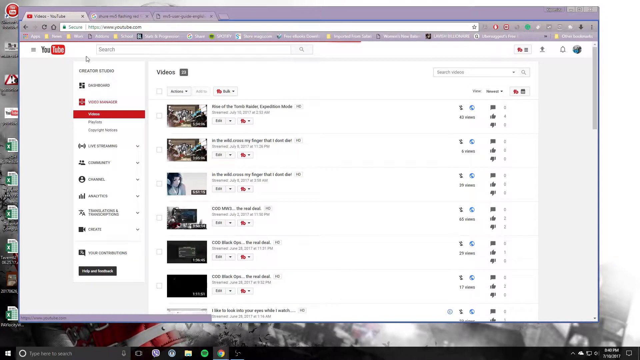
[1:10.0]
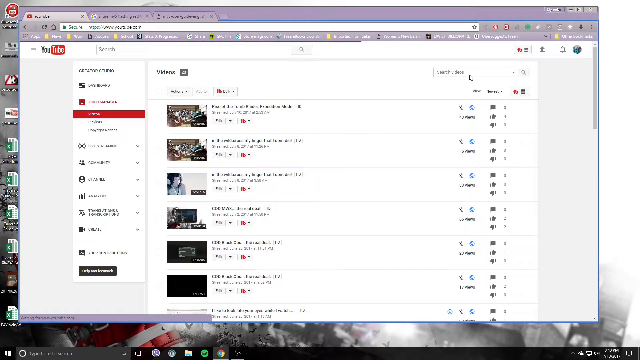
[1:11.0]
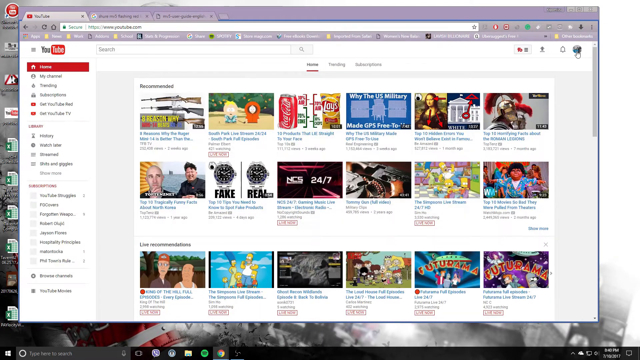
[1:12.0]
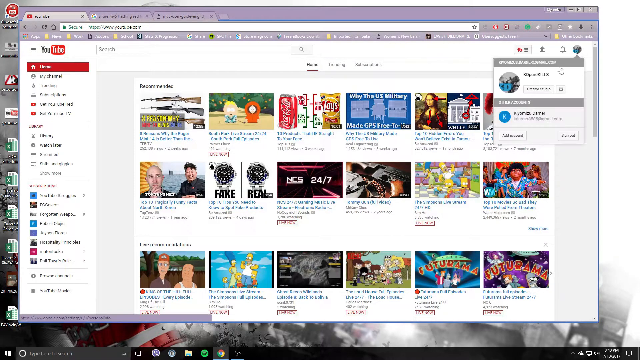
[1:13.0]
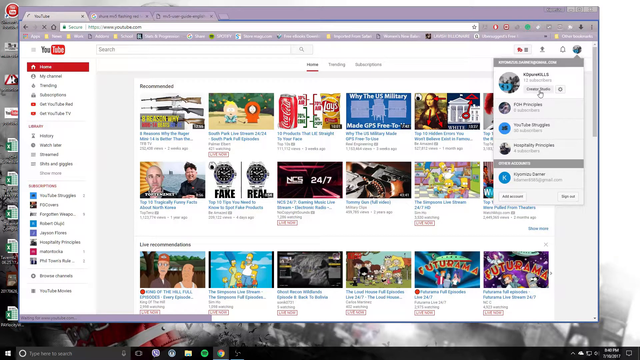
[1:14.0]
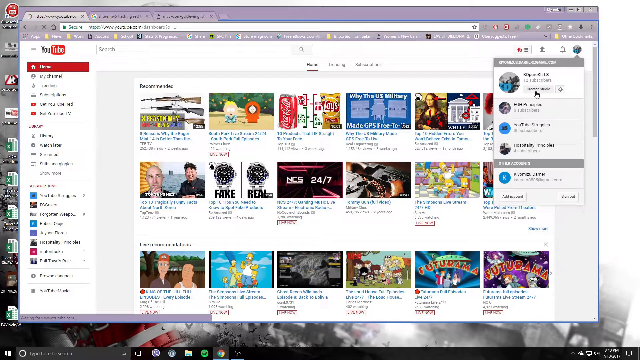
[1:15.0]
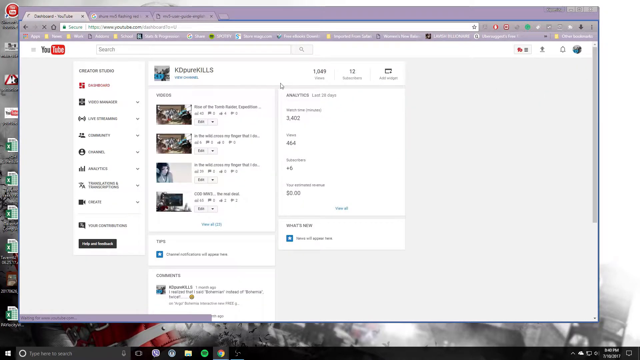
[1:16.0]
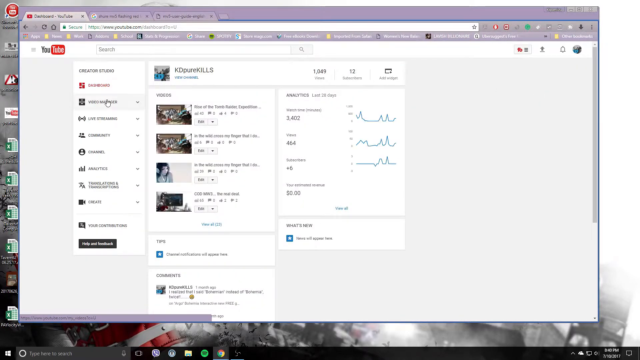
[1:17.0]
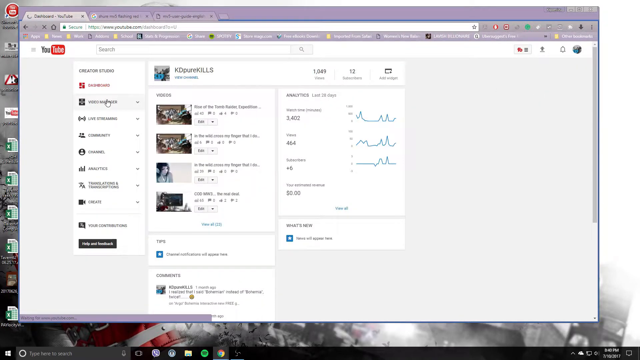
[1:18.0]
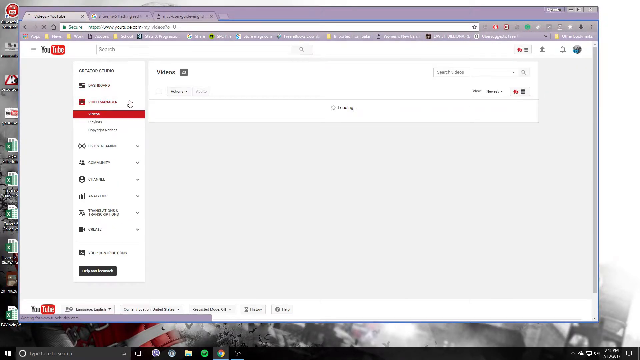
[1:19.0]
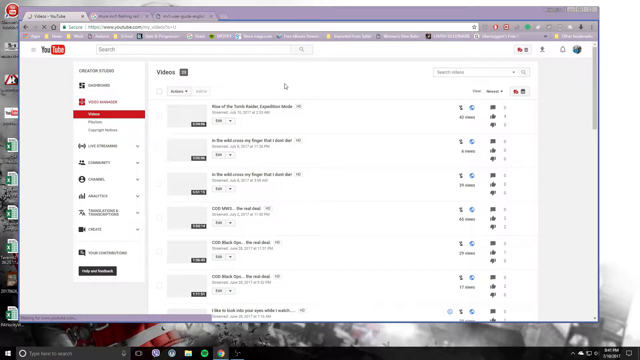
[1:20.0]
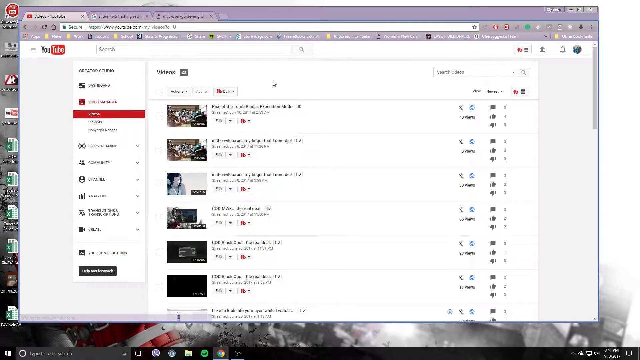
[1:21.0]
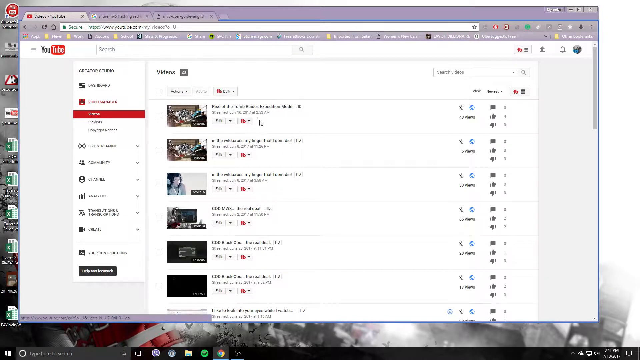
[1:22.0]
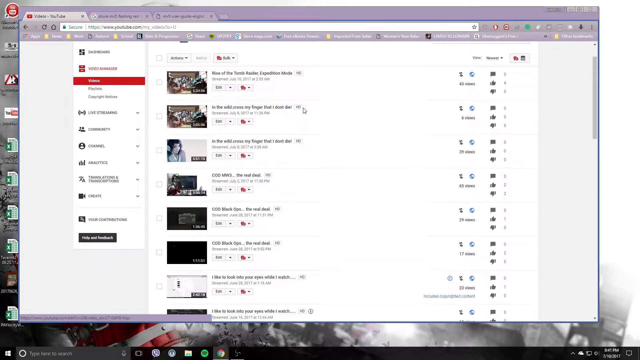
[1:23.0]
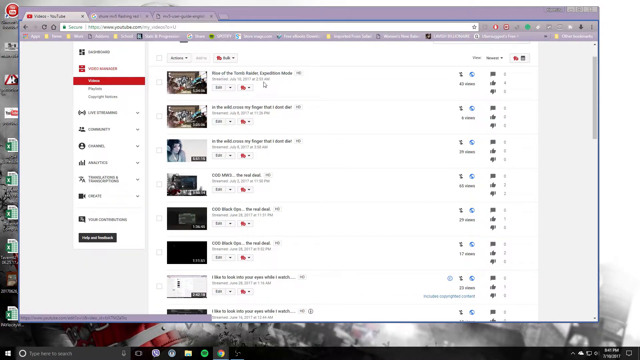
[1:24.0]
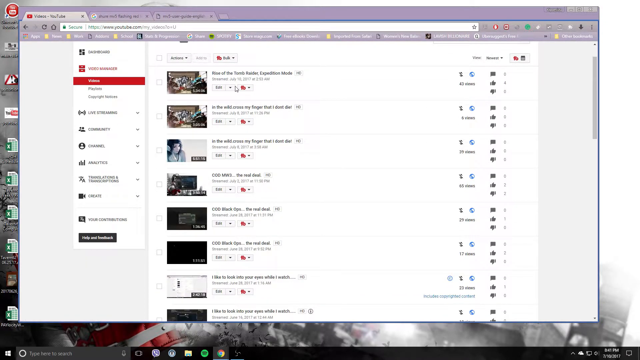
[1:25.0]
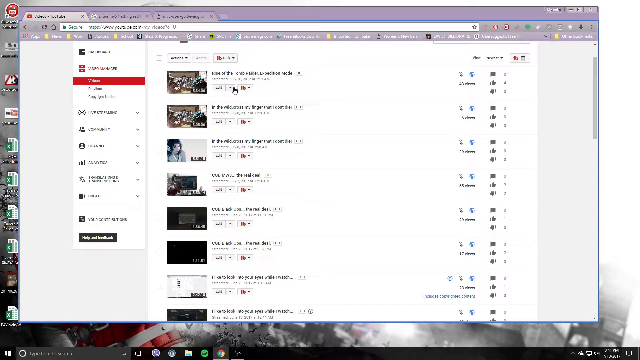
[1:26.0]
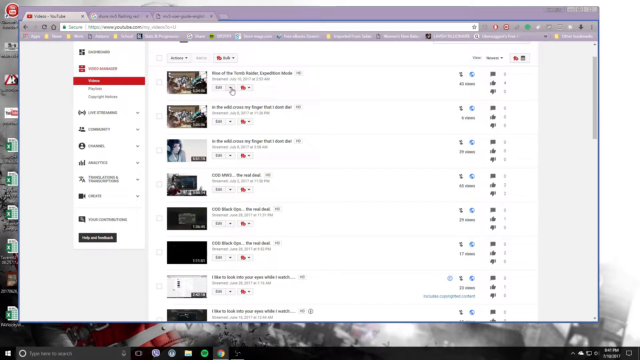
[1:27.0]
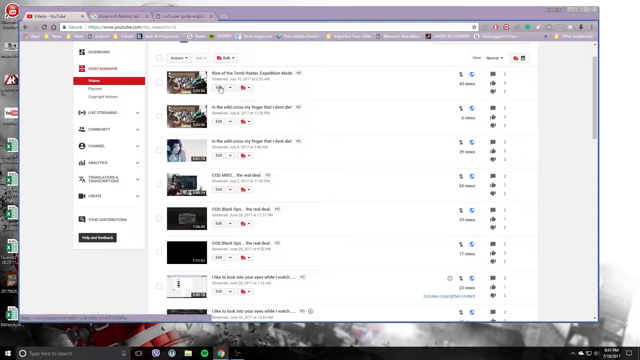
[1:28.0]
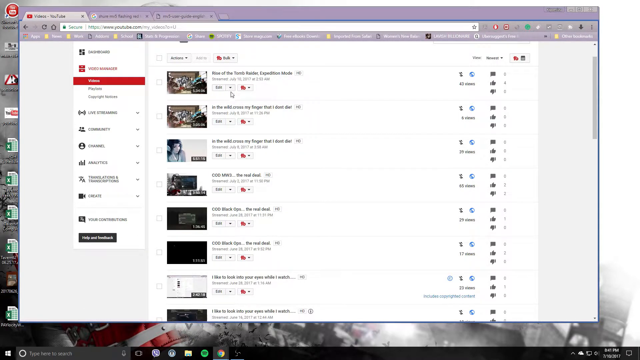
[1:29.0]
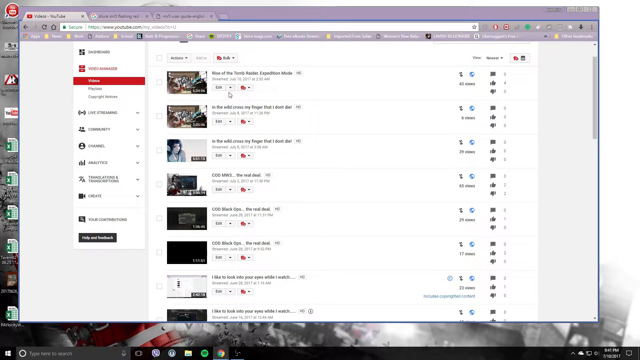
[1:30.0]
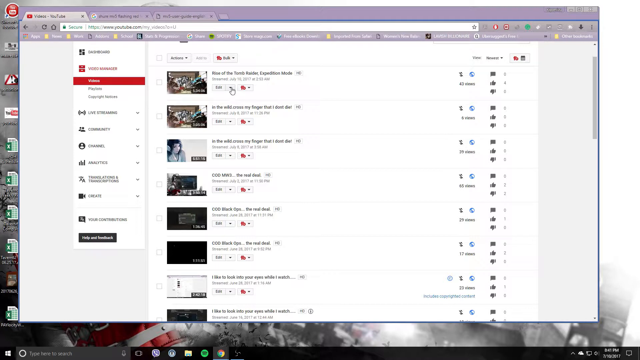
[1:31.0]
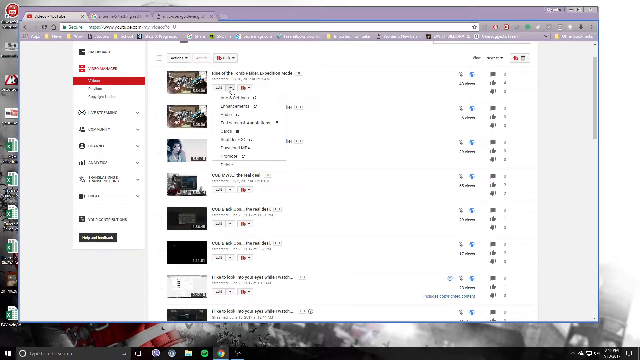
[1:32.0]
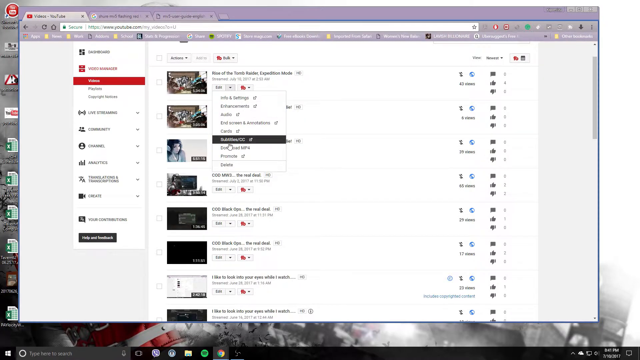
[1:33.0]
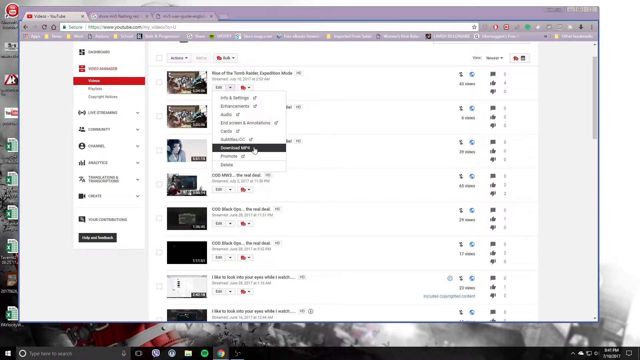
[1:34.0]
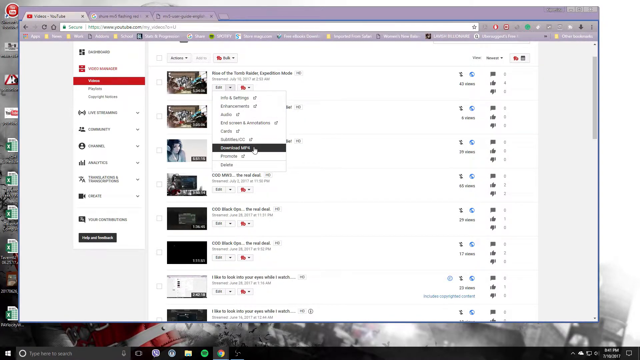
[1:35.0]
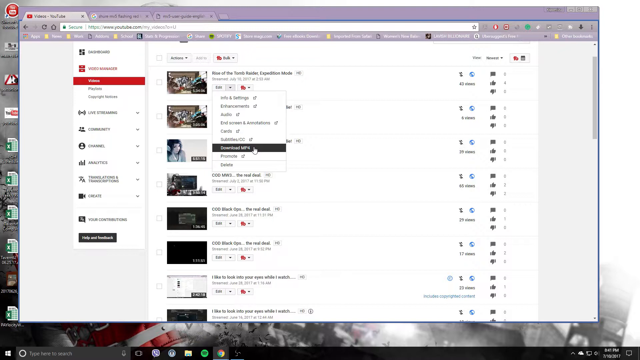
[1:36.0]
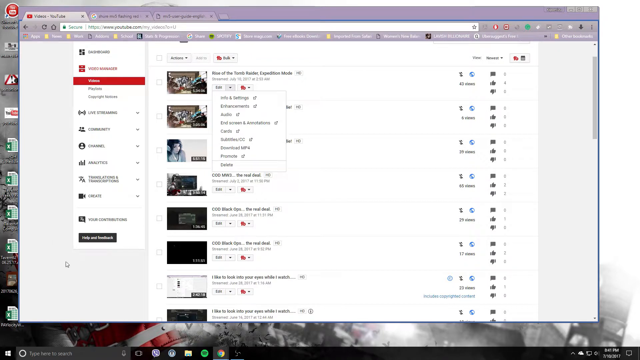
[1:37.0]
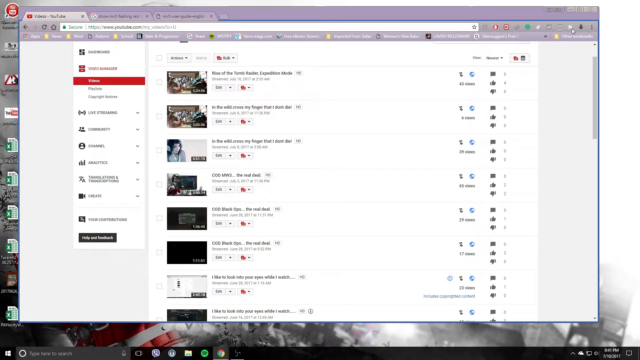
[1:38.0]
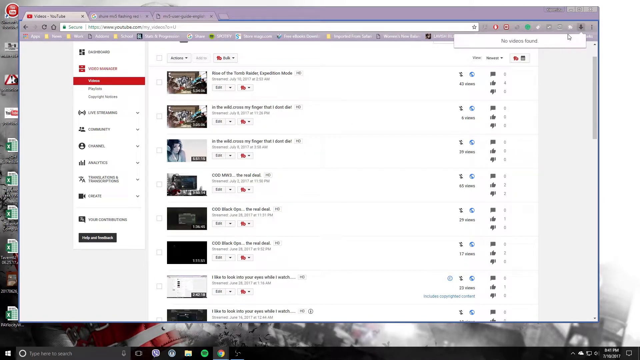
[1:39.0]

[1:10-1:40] A YouTube.com page is shown with the tabs at the top, an empty search bar, a white background, and the YouTube logo in the upper left corner. Creators is on the left side, and Videos looks to be selected, outlined in a blue rectangle with white text. Multiple videos are on the page. The cursor moves around, goes back to the Home section, and then the user Katie Pure Kills is selected. It returns to the Videos tab, moves around in a circle, scrolls up and down a little, hovers over the edit button of the first video listed, opens the edit button's drop-down menu, moves around a little, and clicks on a button in the upper right corner.